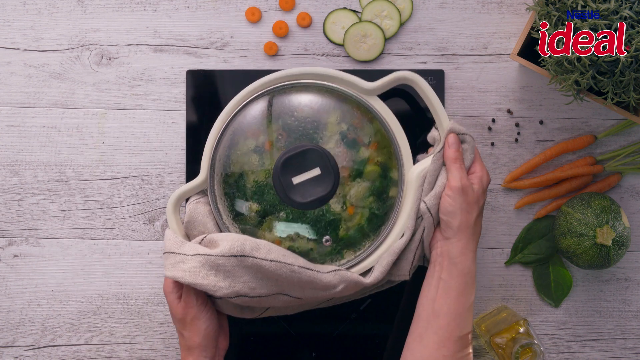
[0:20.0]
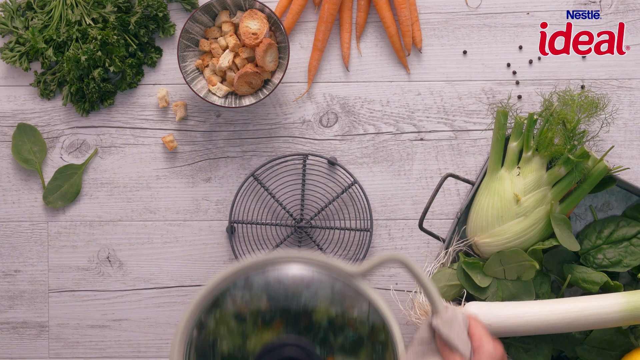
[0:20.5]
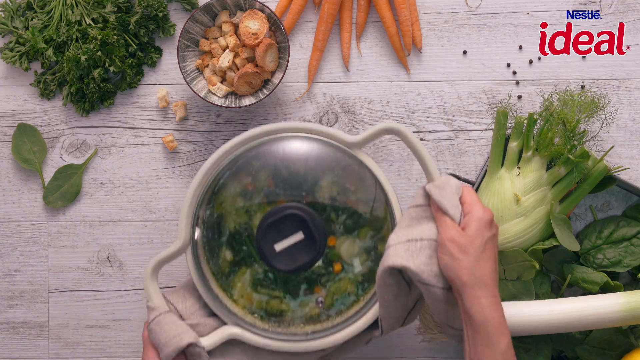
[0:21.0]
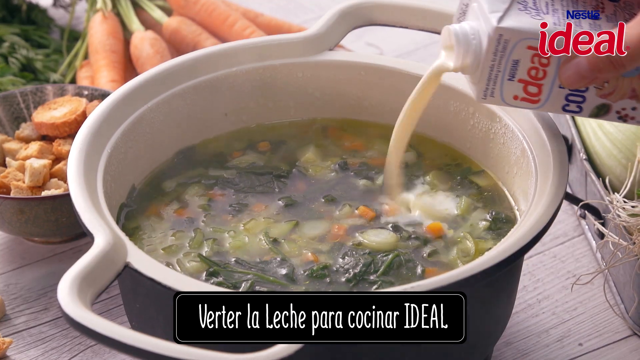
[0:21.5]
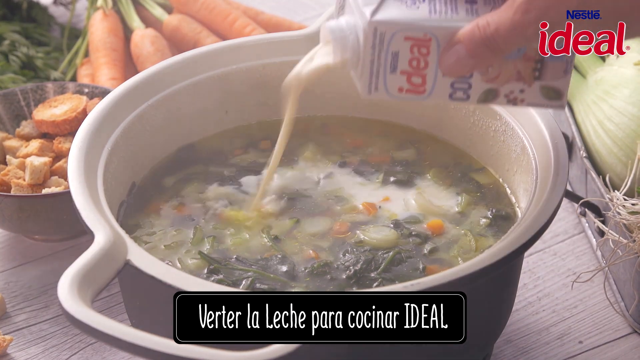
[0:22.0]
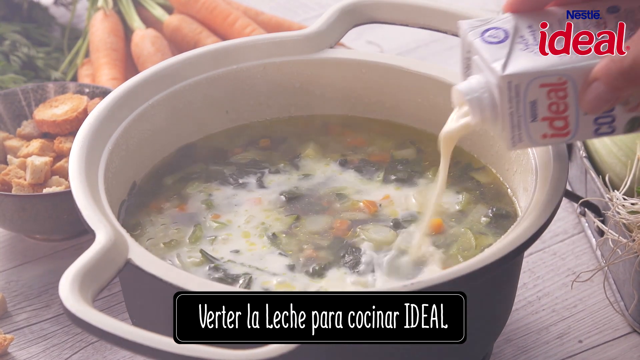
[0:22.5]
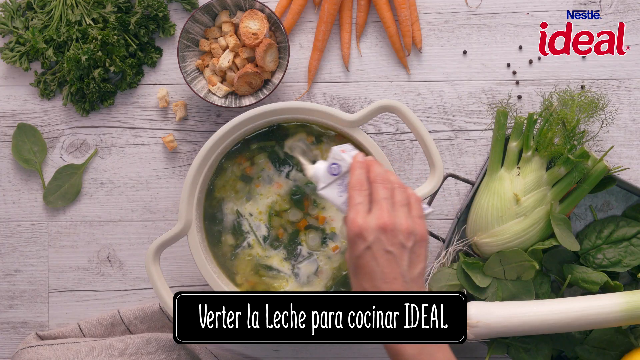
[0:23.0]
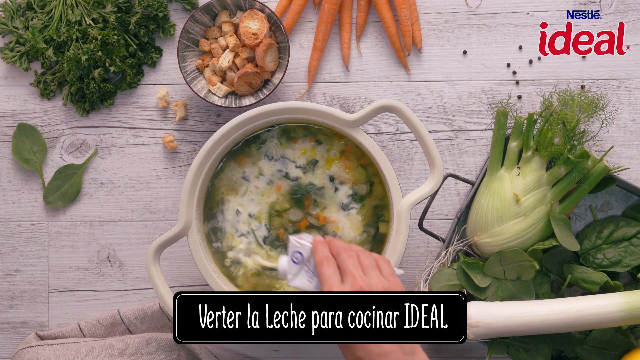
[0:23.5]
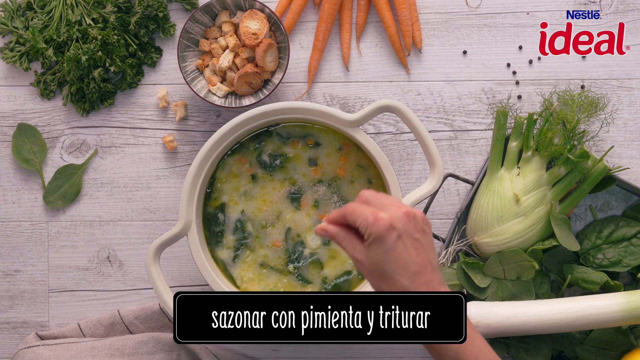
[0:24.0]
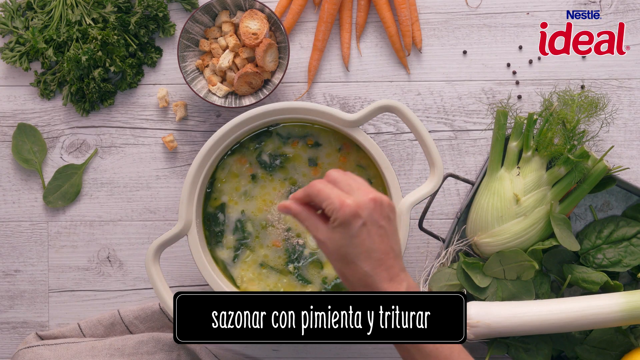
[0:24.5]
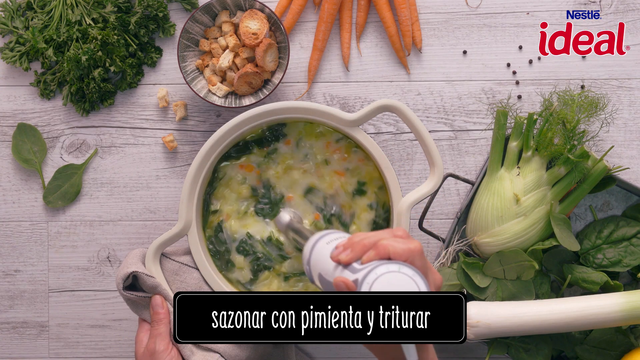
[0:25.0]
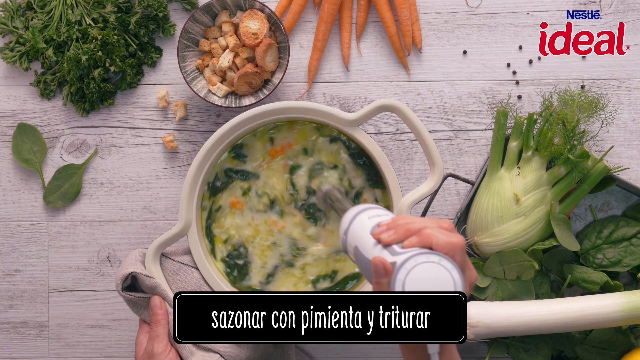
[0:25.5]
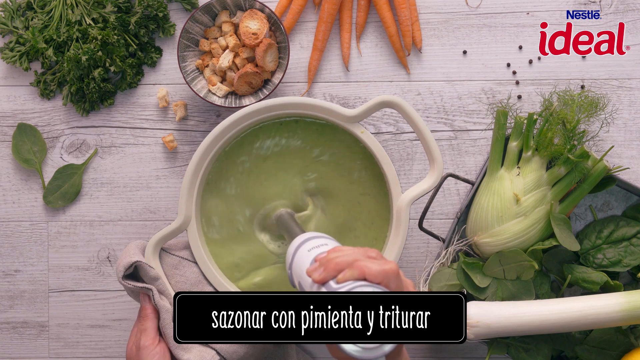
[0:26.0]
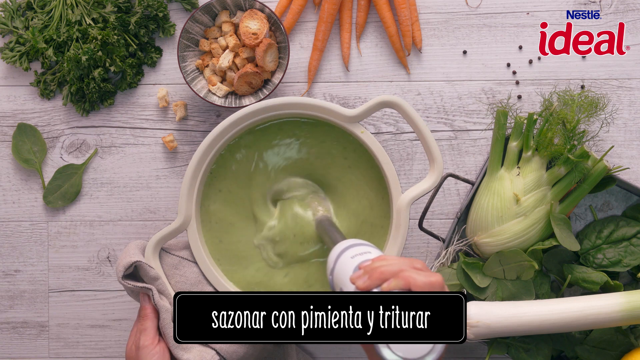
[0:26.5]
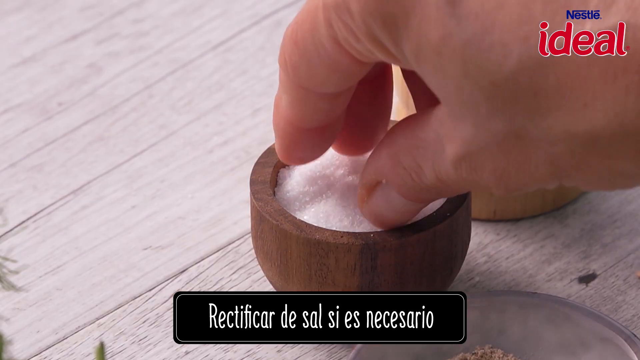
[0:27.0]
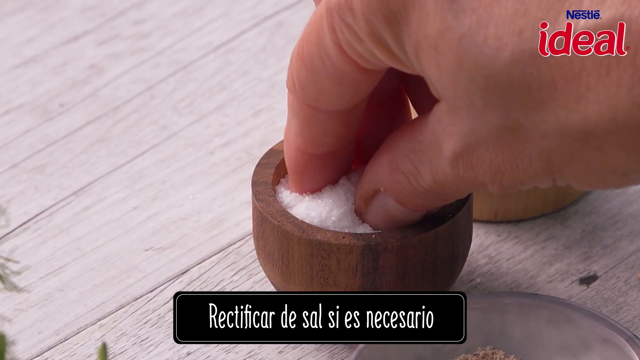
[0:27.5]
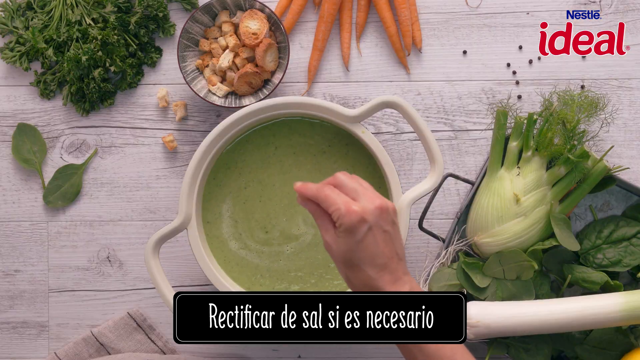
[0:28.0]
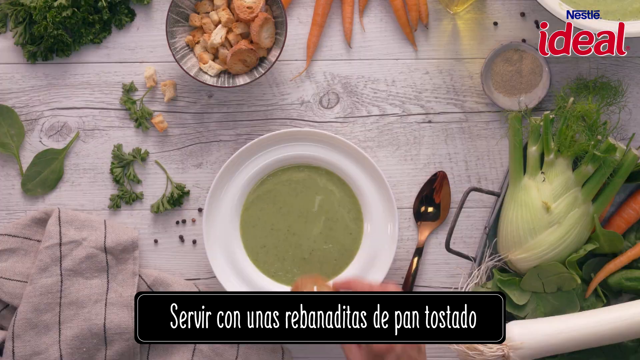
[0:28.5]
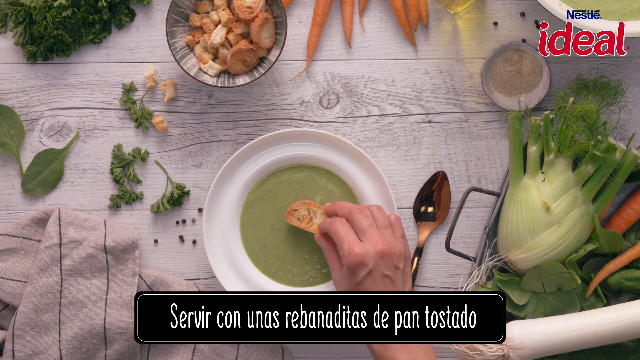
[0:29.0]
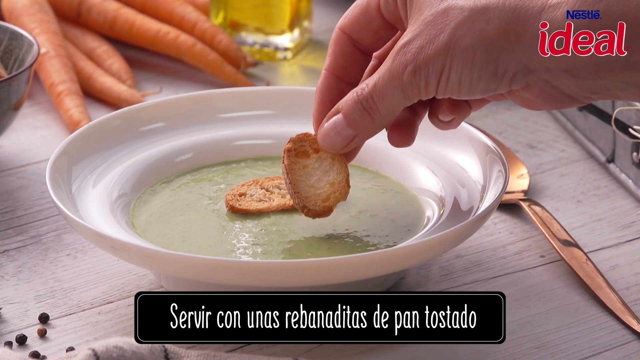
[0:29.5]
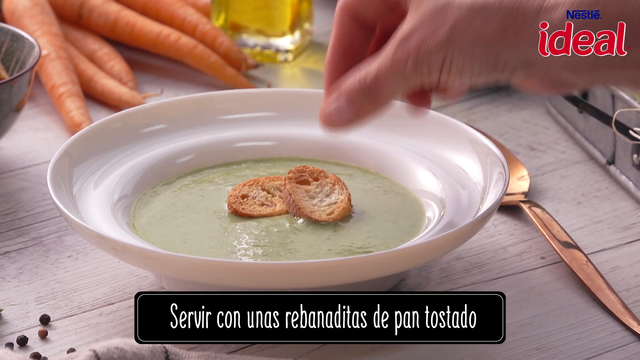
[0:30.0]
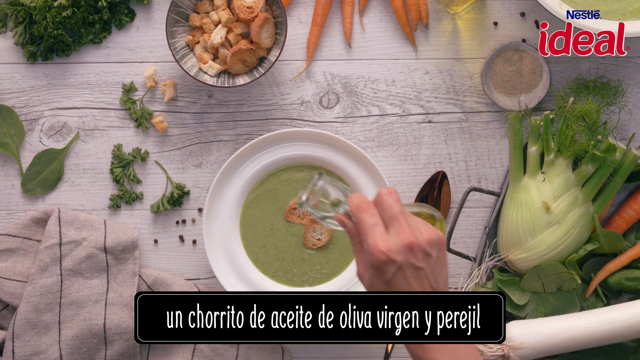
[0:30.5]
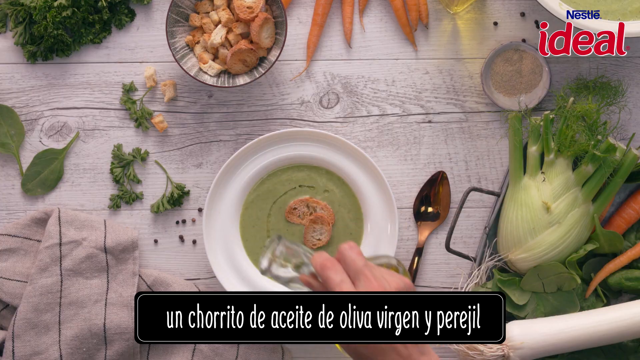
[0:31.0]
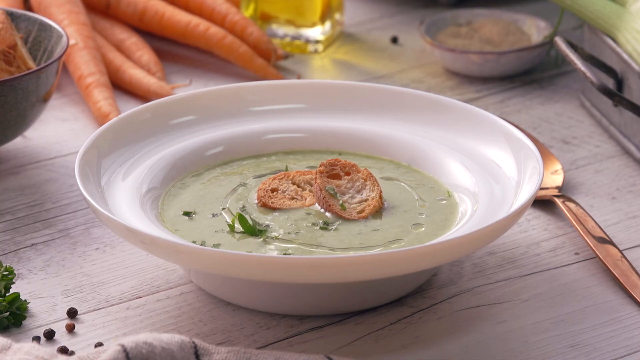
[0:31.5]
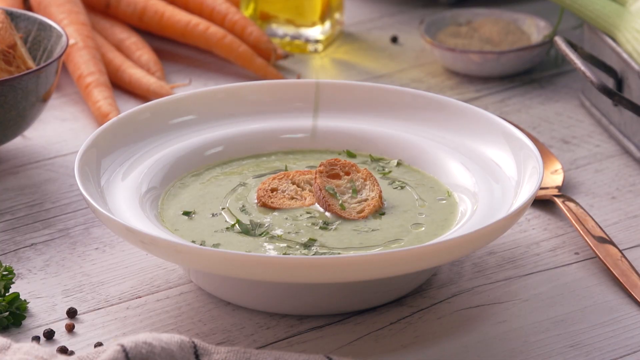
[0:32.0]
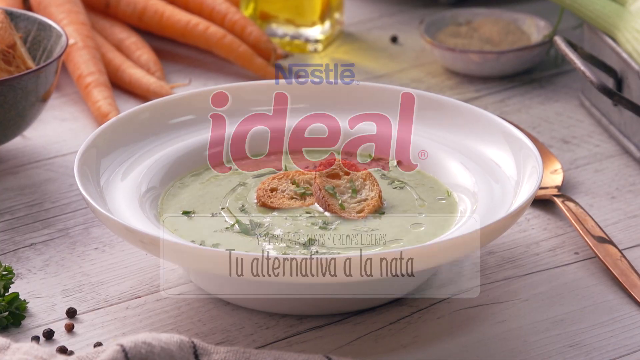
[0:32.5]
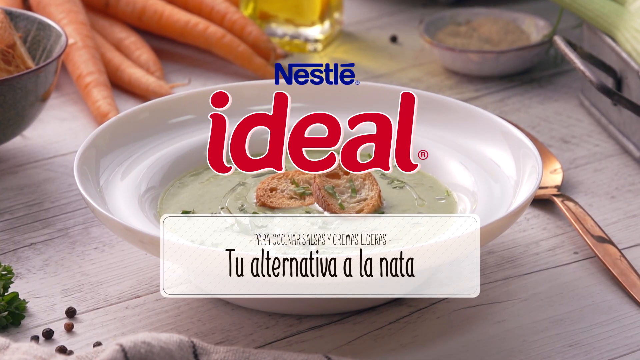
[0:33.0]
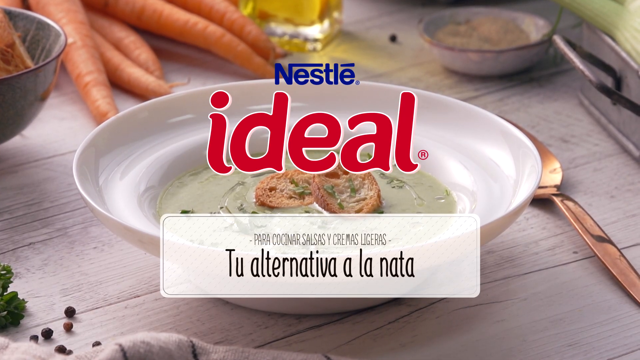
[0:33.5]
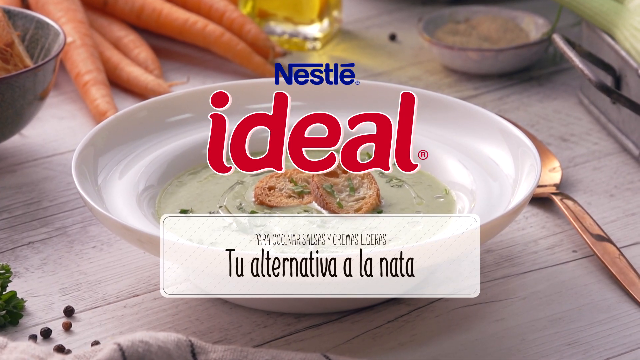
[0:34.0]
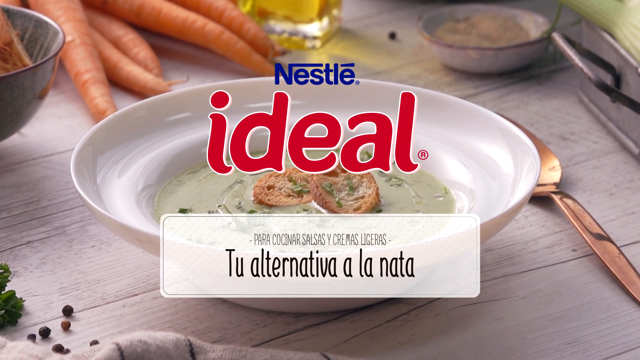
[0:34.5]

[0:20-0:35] The pot is placed on a kind of holder. Everything is cooked and the contents look like soup. A creamy-looking liquid is added to the pot, followed by a pinch of salt. A hand immersion blender is used to blend the vegetables together until it all resembles a somewhat liquidy green soup. The video zooms in on some little pots of salt, and more salt is added to the top of the vegetables. The white bowl returns, now holding green soup, and a couple of little pieces of toasted bread are added on top, along with a sprinkle of oil and some herbs. Nestle Ideal is shown over the top of this again. The recipe seems to be advertising this product.